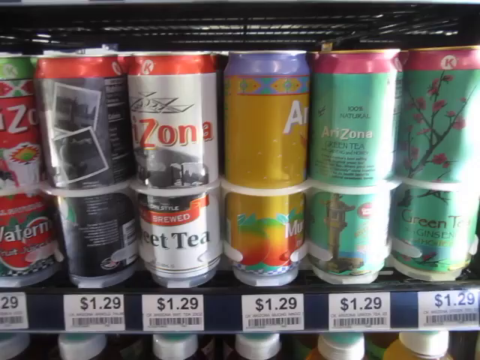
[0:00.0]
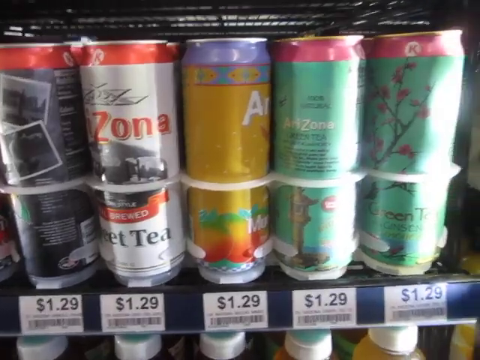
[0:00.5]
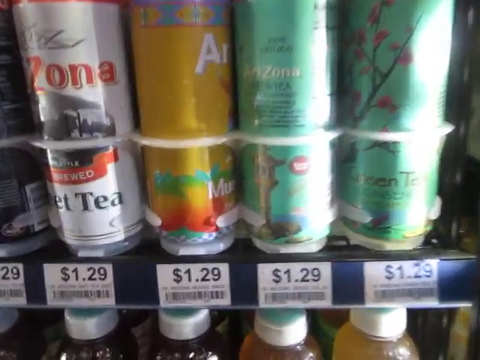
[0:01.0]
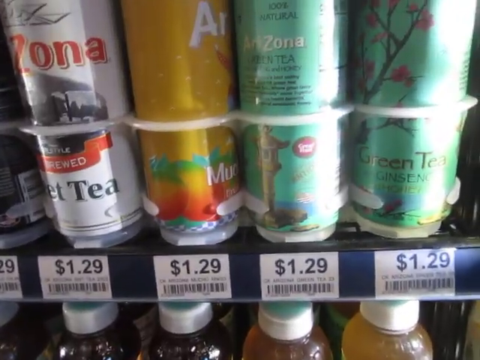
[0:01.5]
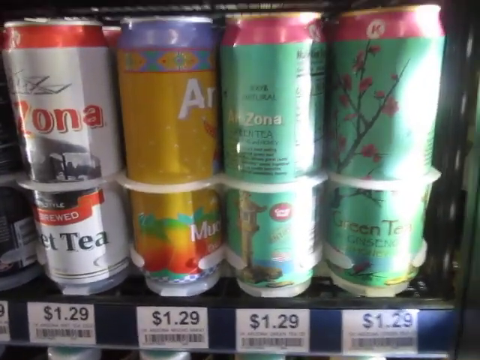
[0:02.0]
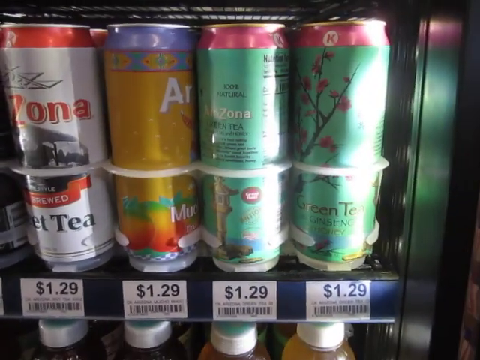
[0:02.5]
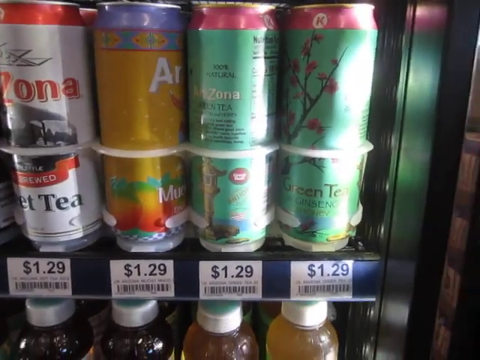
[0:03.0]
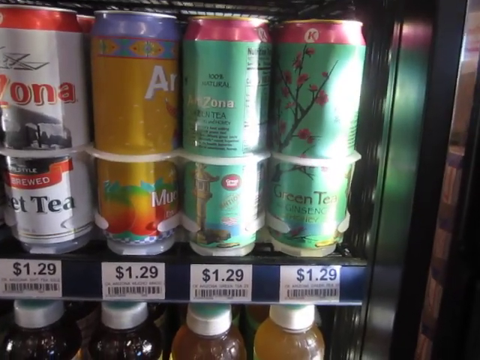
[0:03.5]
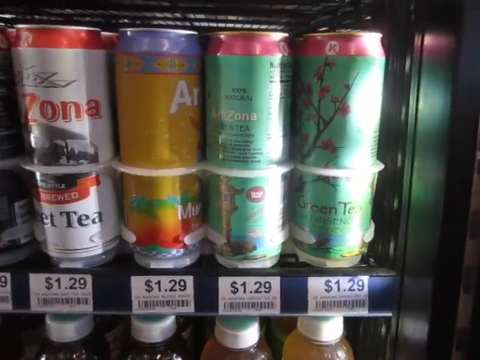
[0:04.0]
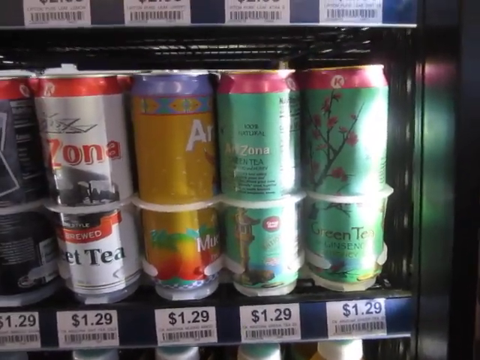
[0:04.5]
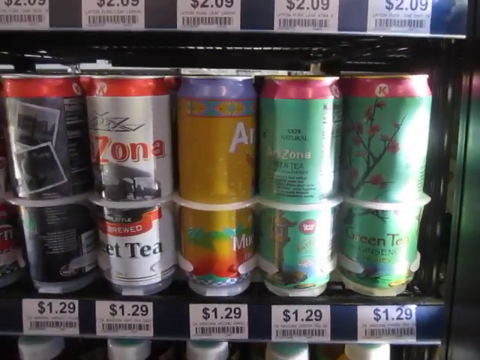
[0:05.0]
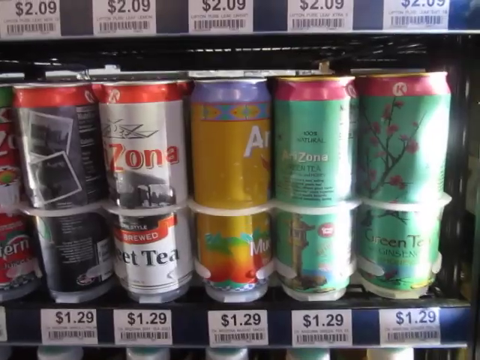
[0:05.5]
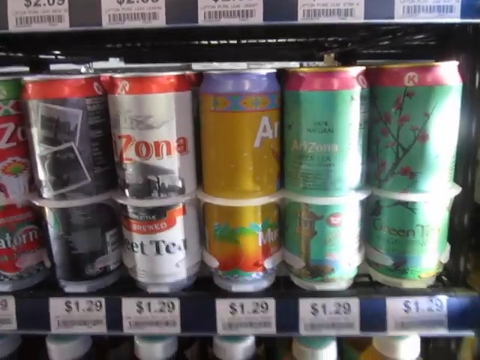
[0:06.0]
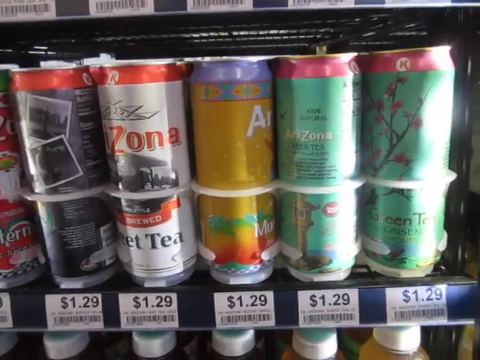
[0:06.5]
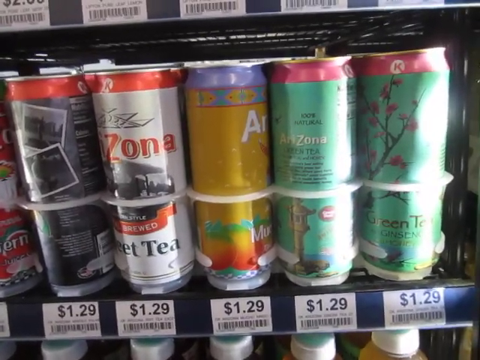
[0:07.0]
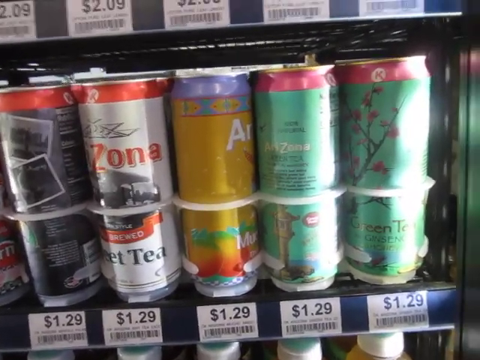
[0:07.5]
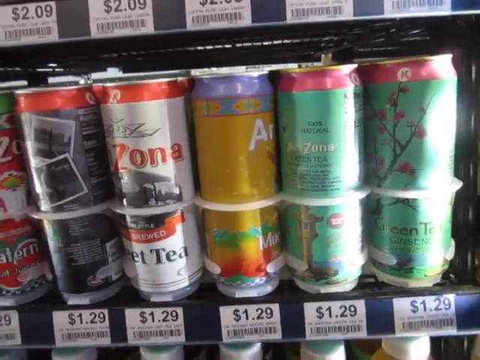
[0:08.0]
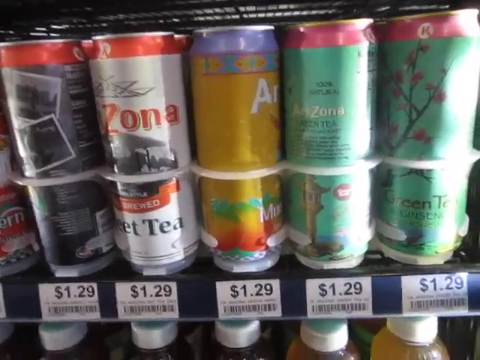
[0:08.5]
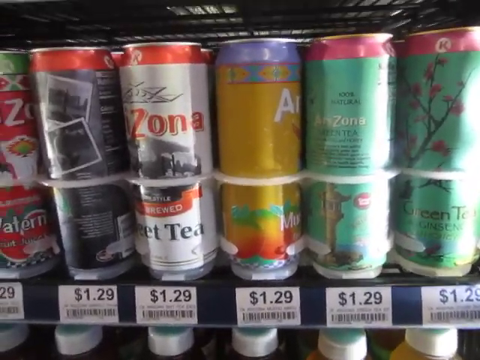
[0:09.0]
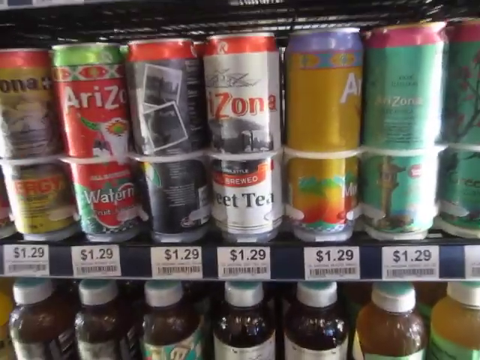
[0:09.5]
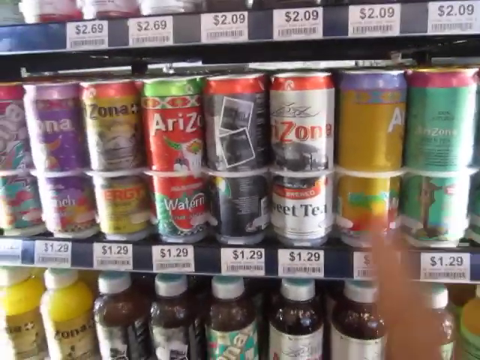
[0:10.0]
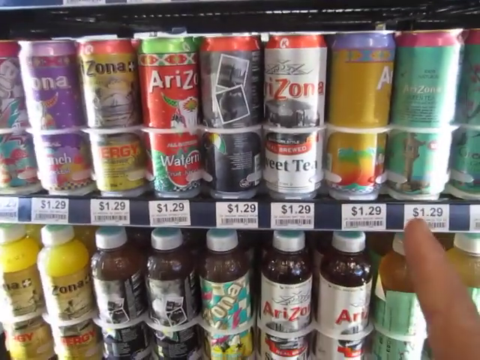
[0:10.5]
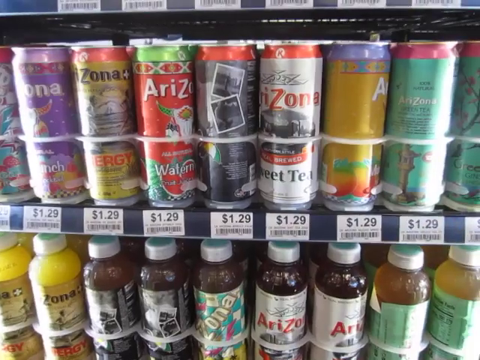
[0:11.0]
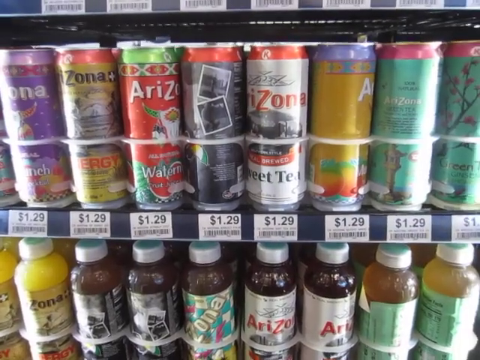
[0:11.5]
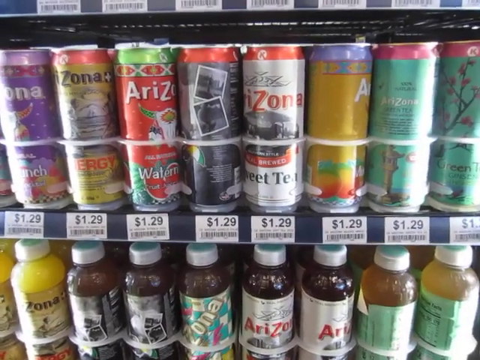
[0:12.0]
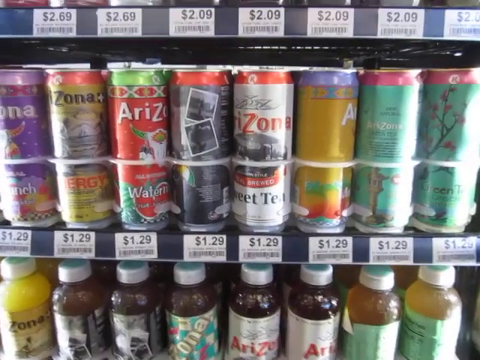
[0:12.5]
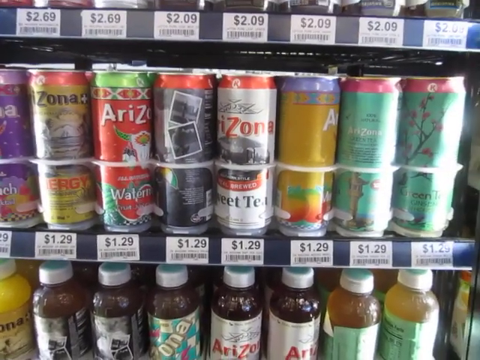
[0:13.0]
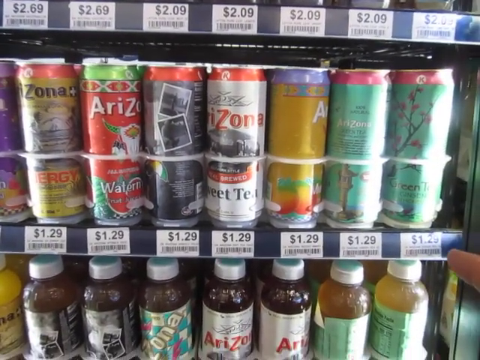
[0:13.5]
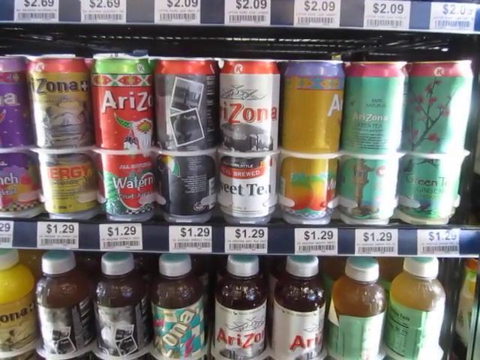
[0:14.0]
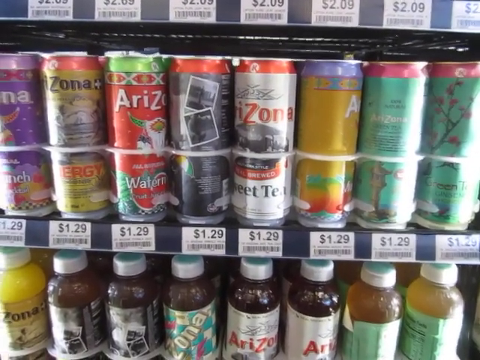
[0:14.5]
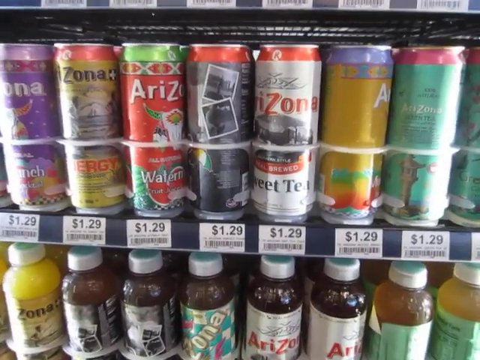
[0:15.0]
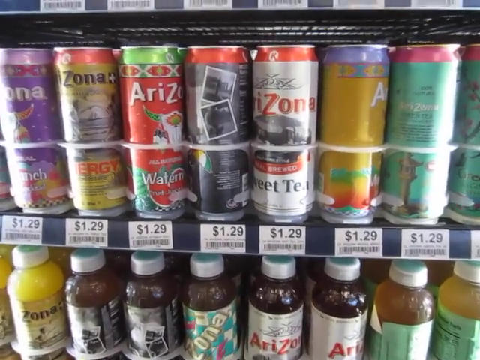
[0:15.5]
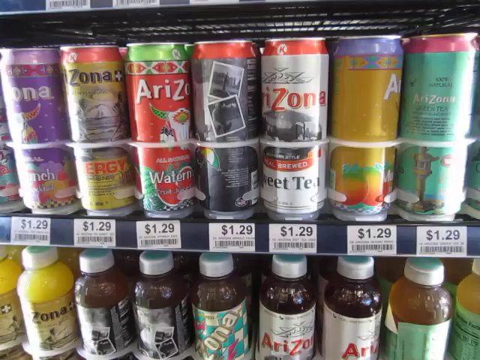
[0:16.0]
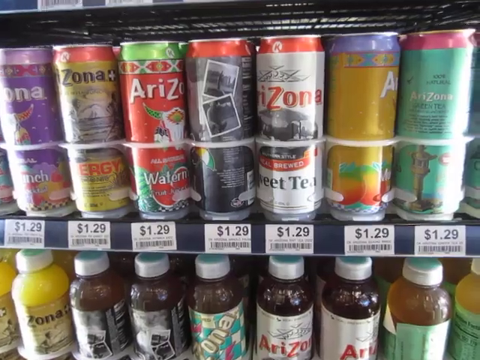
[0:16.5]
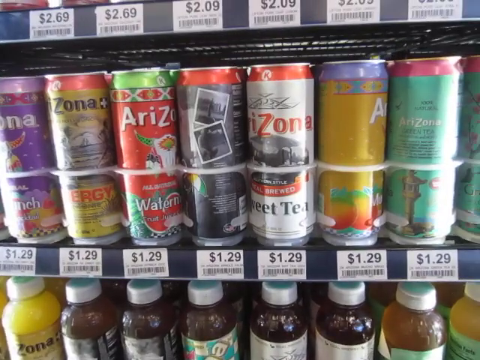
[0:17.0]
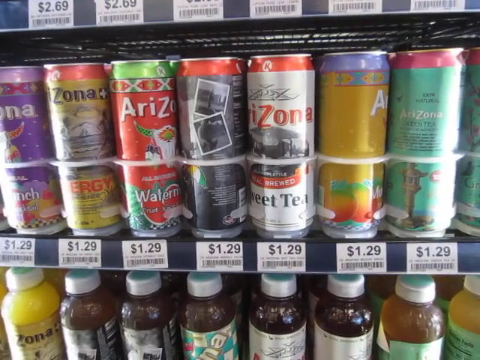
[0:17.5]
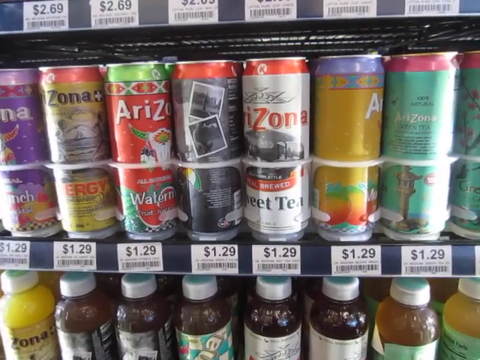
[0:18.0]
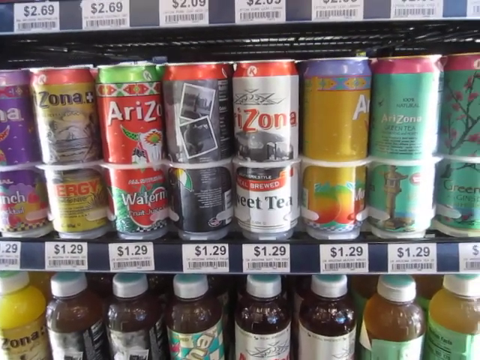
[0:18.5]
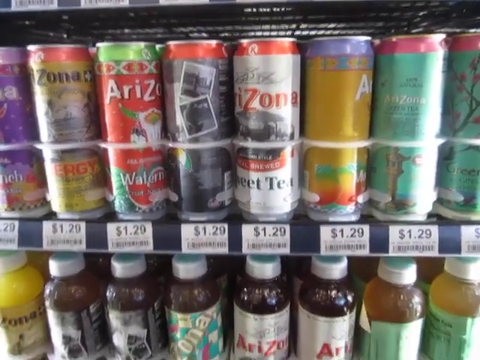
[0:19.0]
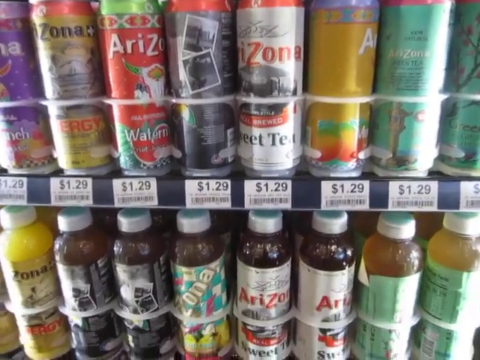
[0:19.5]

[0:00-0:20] A phone recording shows someone looking into a convenience store refrigerator full of Arizona iced tea cans in a multitude of flavors. He points at them and seems to be talking about them. Each can is priced at $1.29. The row below holds more Arizona iced teas, but in plastic bottles rather than the usual aluminum cans. Circle K logos are on the tops of the cans, so they seem to be special Circle K cans, and the store is possibly a Circle K. The man's reflection is slightly visible. Some sunlight reflection appears, apparently indicating daytime outside with sunlight and little cloud cover. The shelves holding the cans are black, and white plastic barriers hold the cans in place.